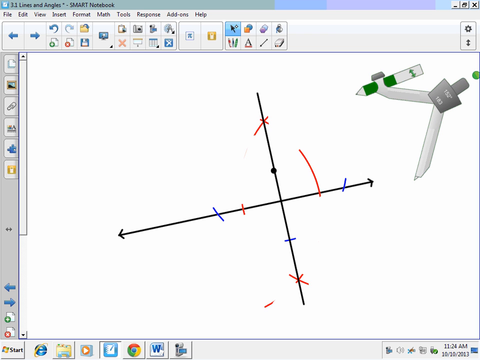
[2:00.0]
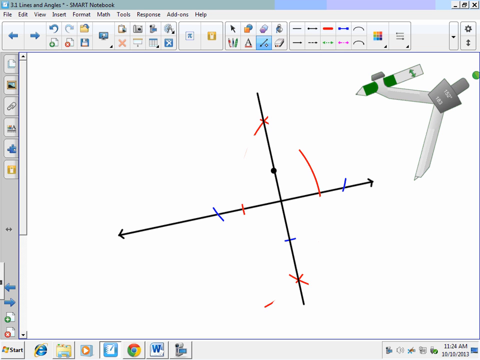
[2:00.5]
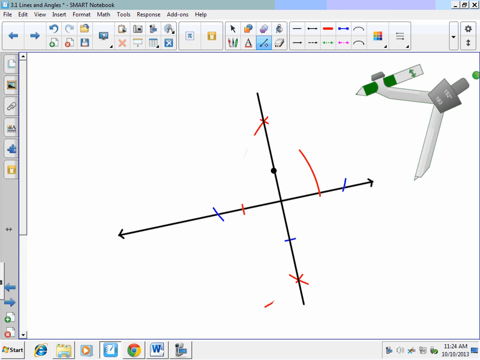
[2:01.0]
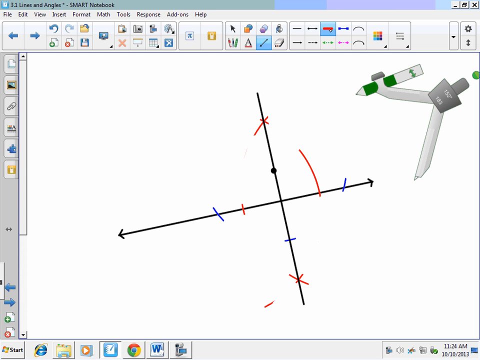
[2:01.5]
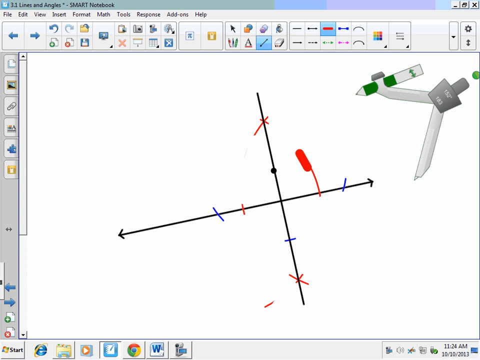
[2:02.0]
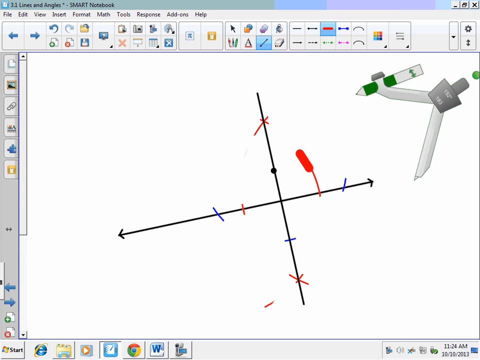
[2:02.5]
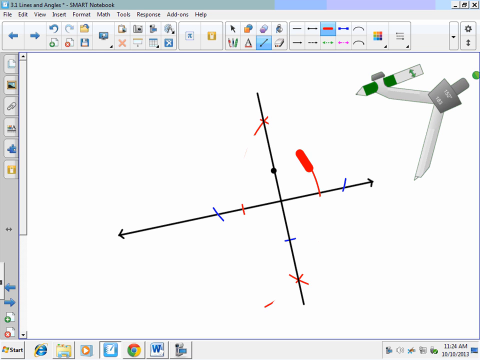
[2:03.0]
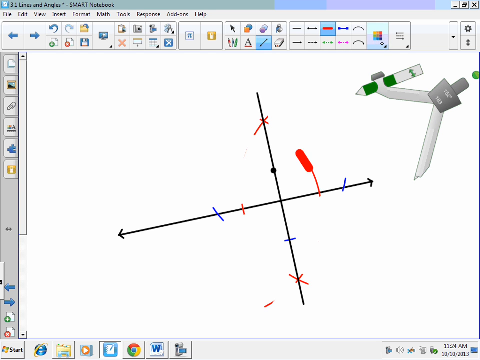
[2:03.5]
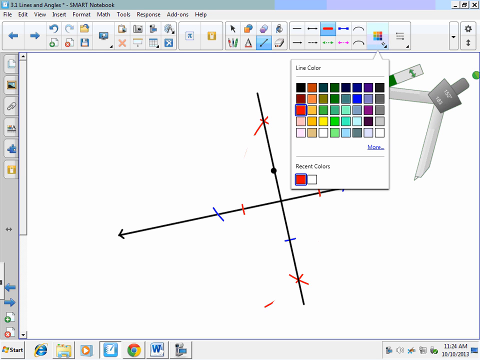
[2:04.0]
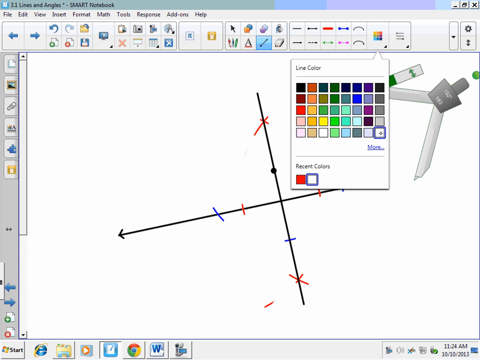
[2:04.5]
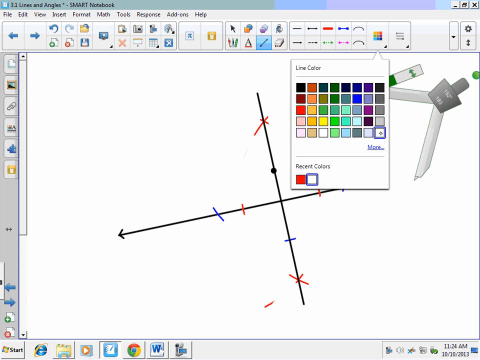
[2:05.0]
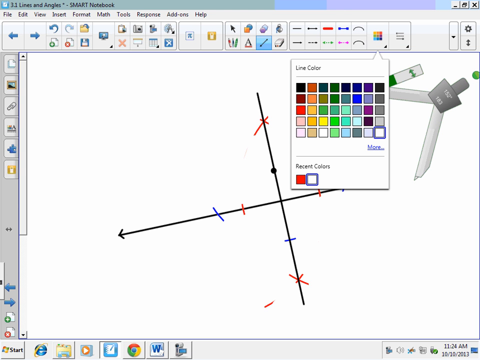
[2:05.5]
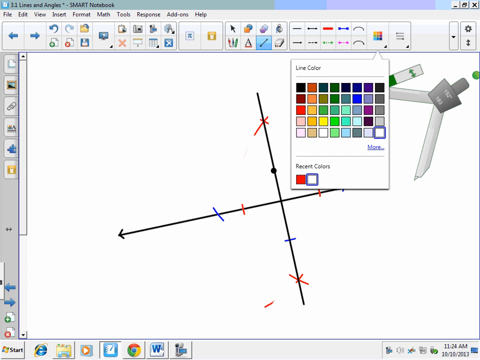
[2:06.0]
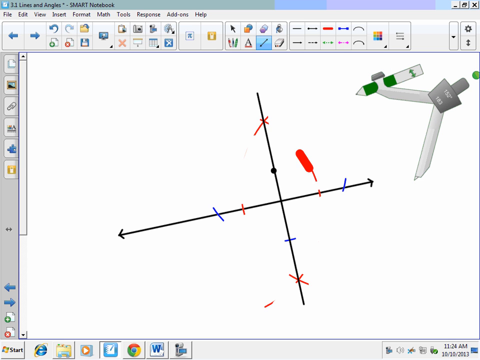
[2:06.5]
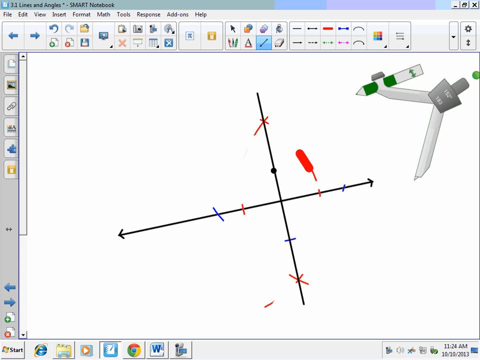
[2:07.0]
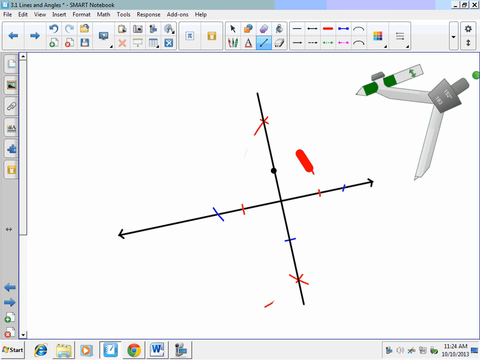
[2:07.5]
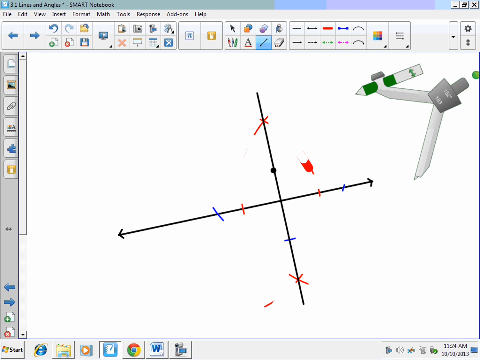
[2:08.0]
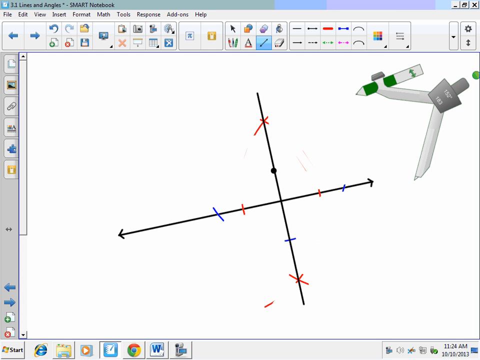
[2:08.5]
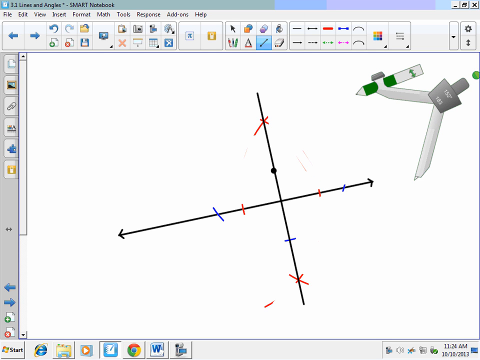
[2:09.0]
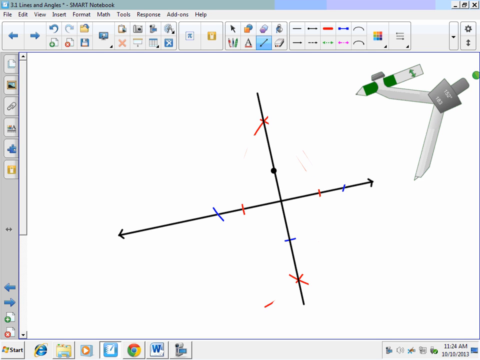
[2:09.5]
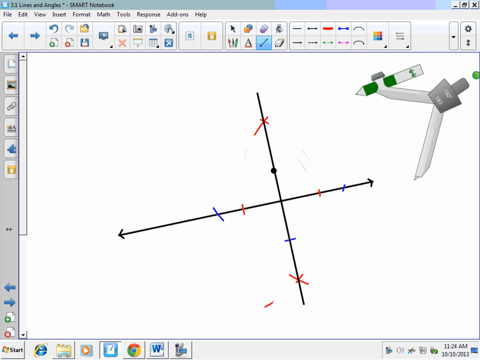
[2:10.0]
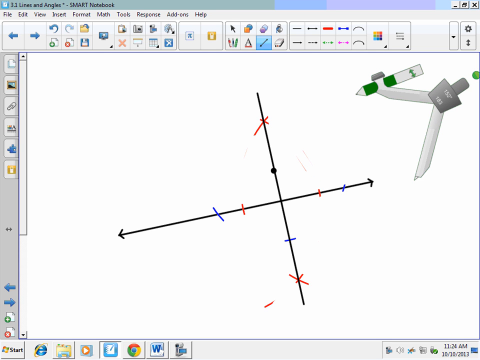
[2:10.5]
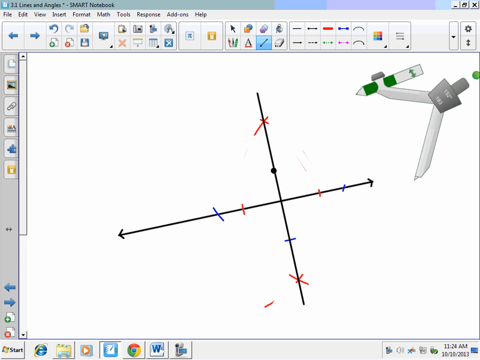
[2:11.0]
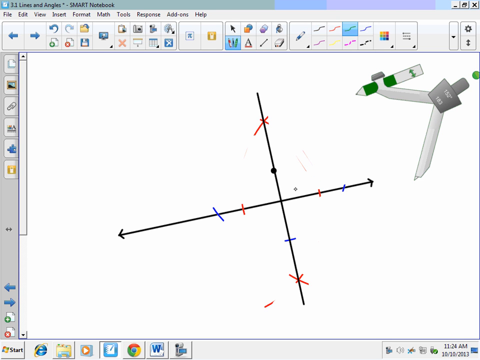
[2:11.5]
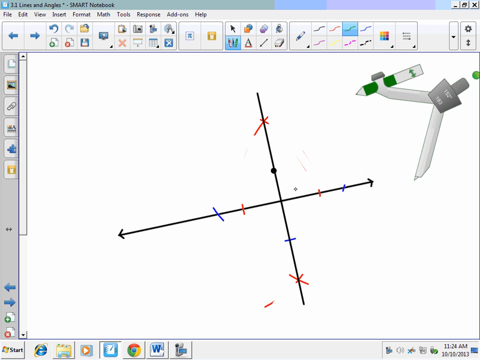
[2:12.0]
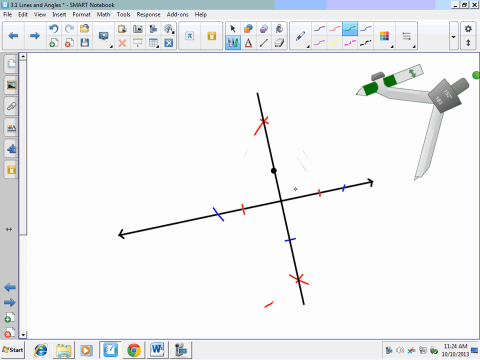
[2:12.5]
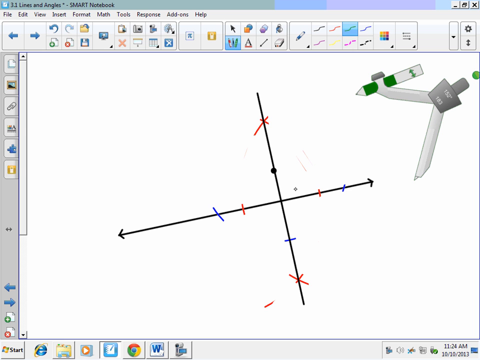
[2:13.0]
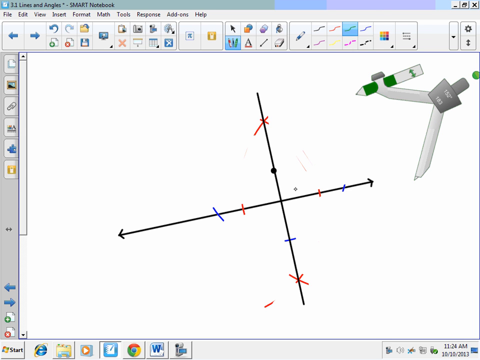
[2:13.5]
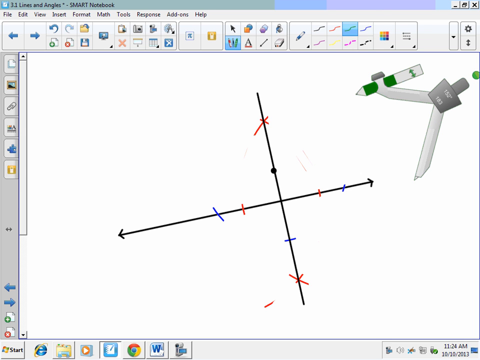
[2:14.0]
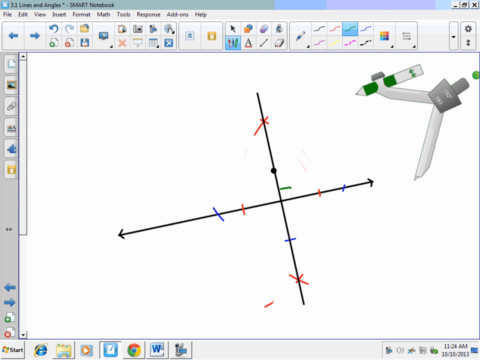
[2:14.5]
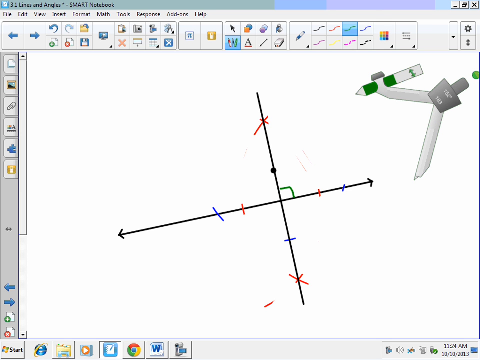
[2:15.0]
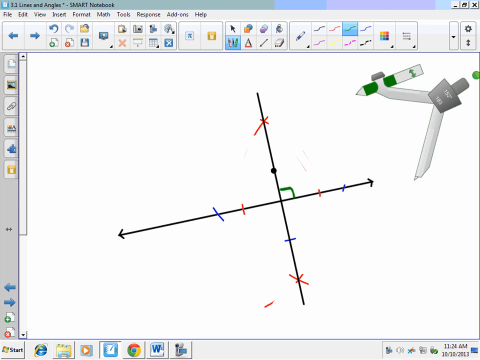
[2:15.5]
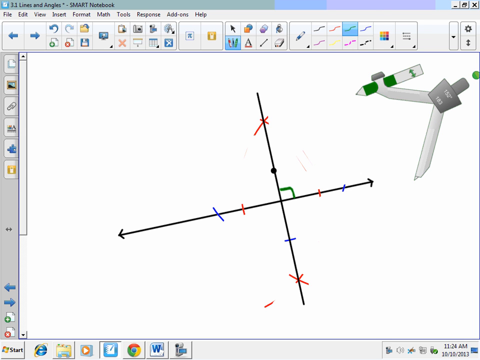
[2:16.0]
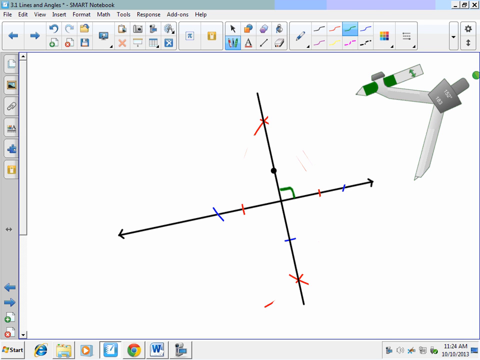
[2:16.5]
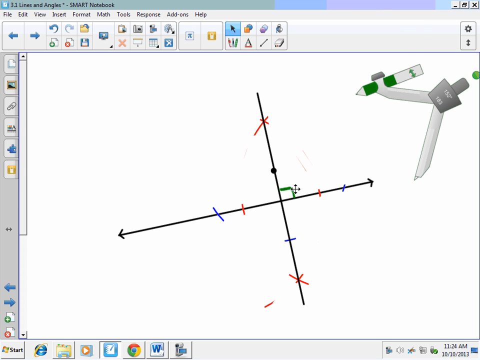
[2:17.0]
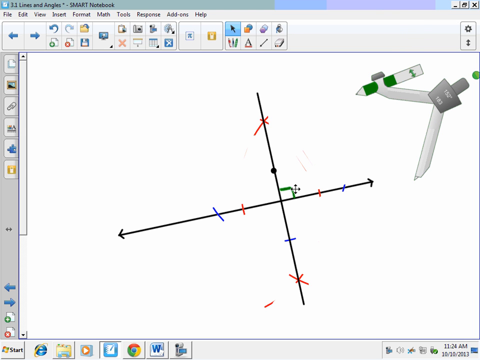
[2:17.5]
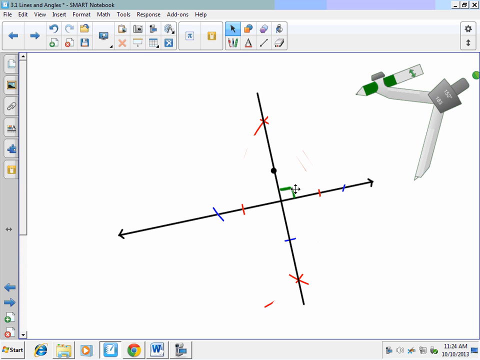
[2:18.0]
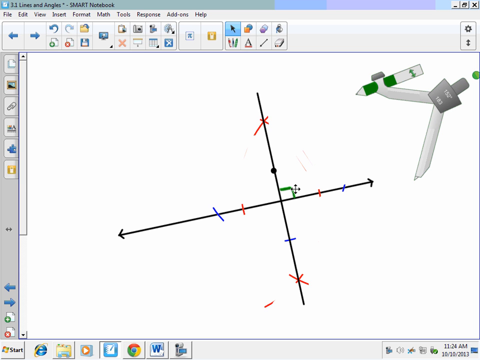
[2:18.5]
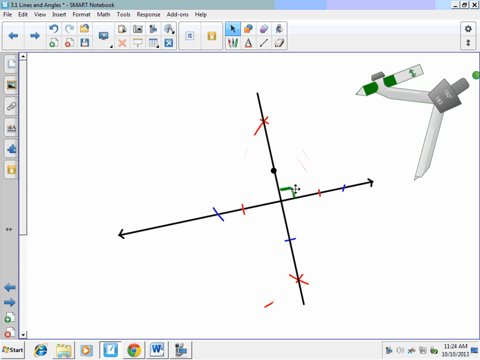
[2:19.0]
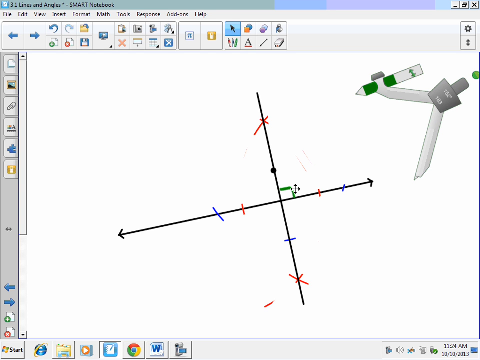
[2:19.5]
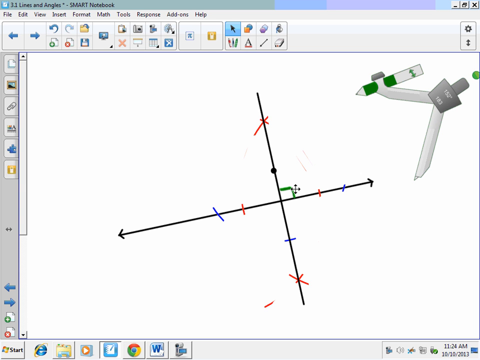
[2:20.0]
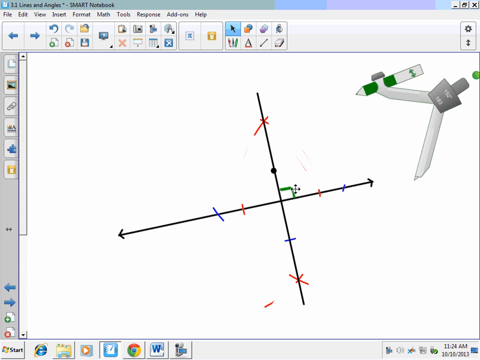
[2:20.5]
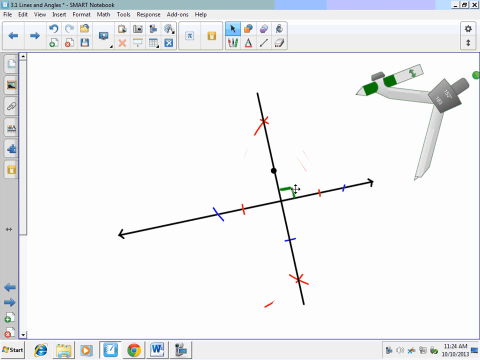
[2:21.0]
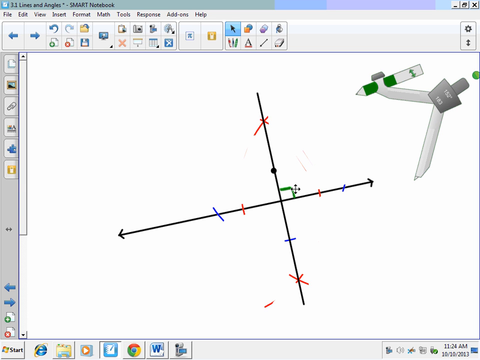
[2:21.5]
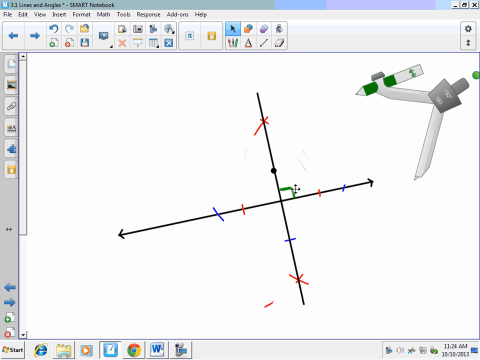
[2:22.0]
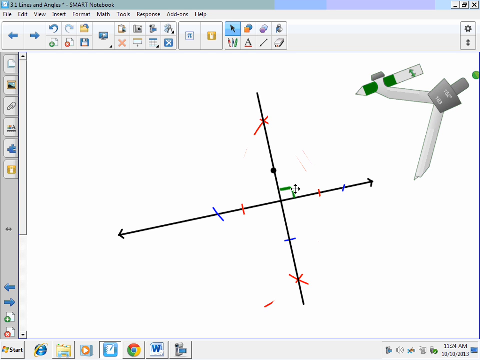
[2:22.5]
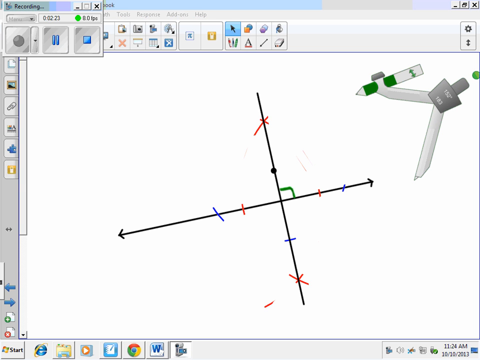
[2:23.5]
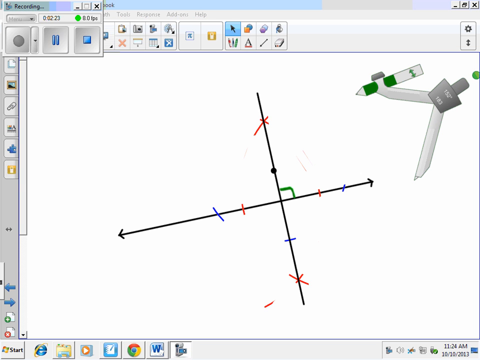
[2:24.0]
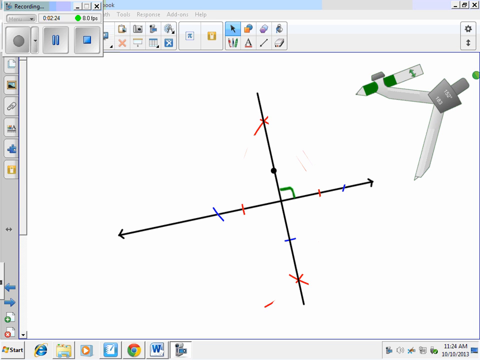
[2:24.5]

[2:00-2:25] The lines are on the paper with everything removed except the intersecting points. At the top, an option to pick different lines is shown, and a thick red line is chosen and drawn on the top right quadrant of the page. The tab to switch the line color is then selected and white is selected, and the white is used to remove more of the markings from the earlier thinner line as well as the thick line just drawn. The line color is changed to green, and what appears to be a right angle, like half of a square, is drawn on the top right quadrant. The view then stays still, and a new icon remains on that part of the quadrant right beside the green square, which probably depicts a 90-degree angle.